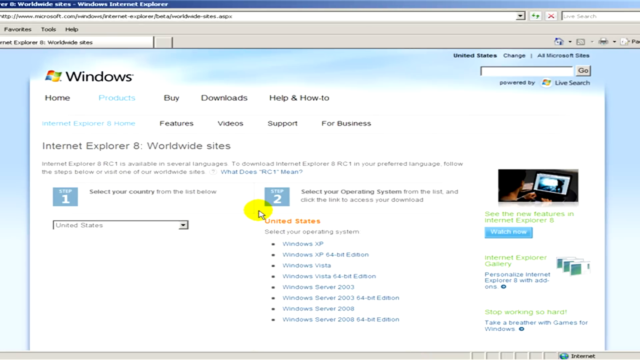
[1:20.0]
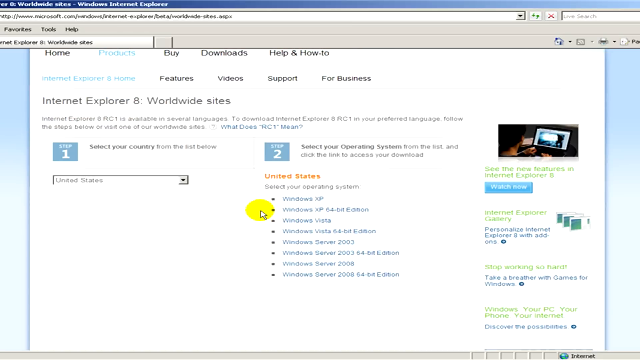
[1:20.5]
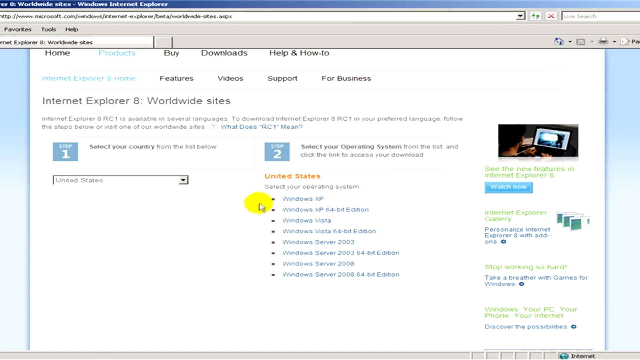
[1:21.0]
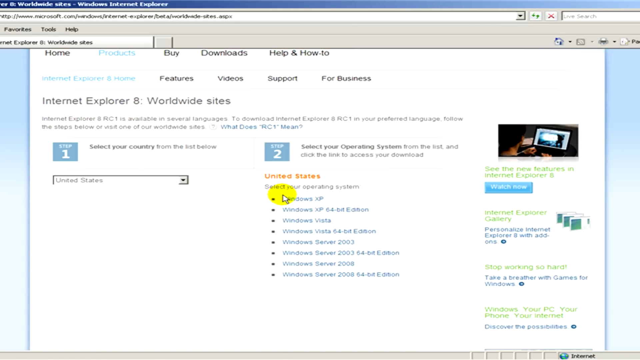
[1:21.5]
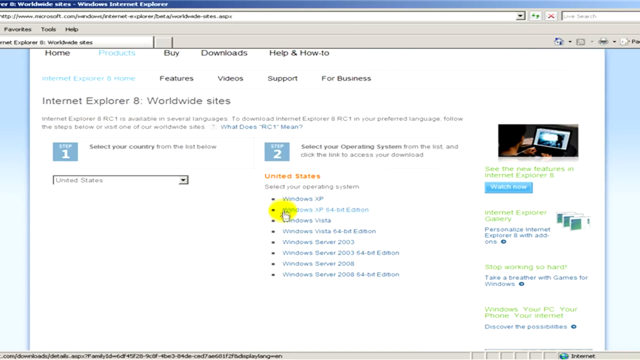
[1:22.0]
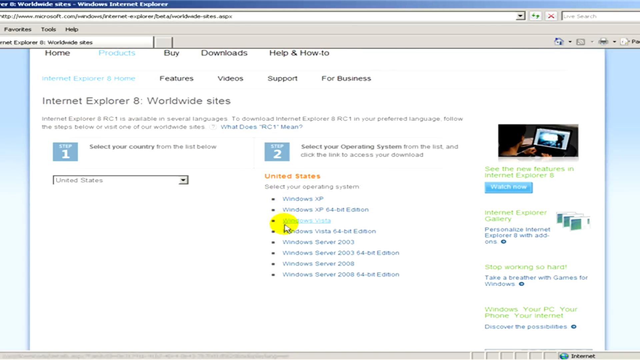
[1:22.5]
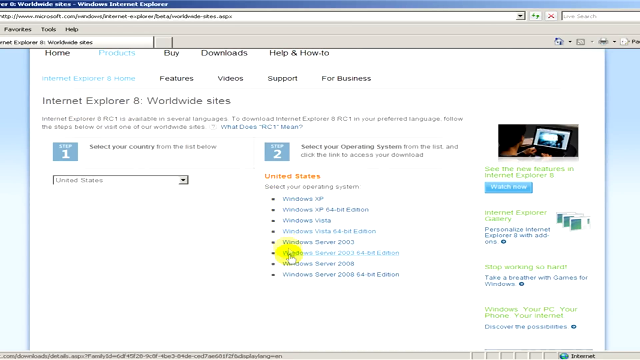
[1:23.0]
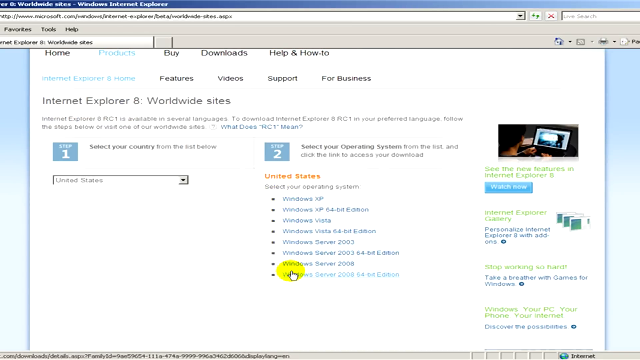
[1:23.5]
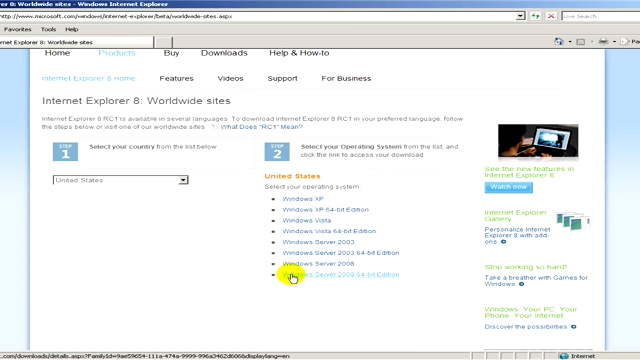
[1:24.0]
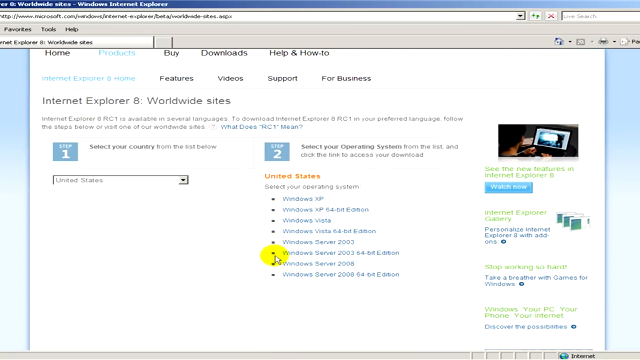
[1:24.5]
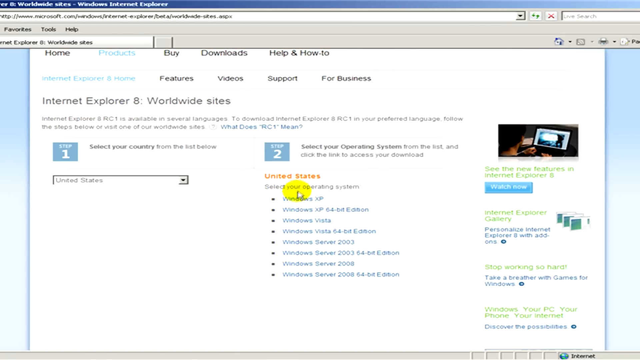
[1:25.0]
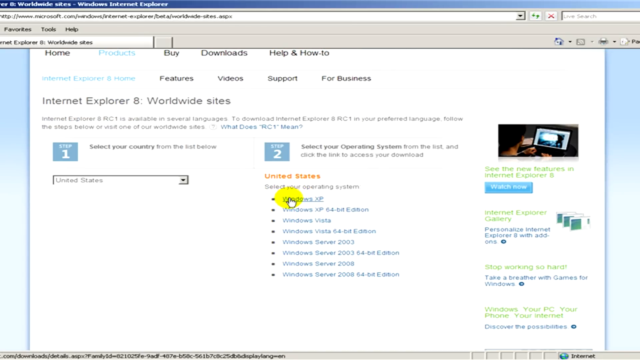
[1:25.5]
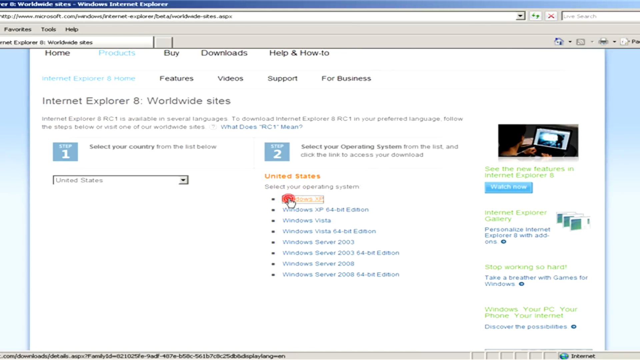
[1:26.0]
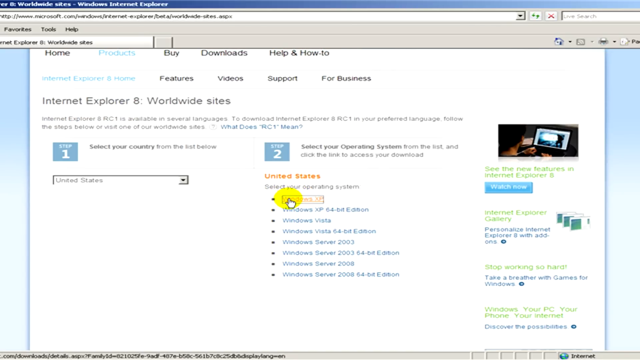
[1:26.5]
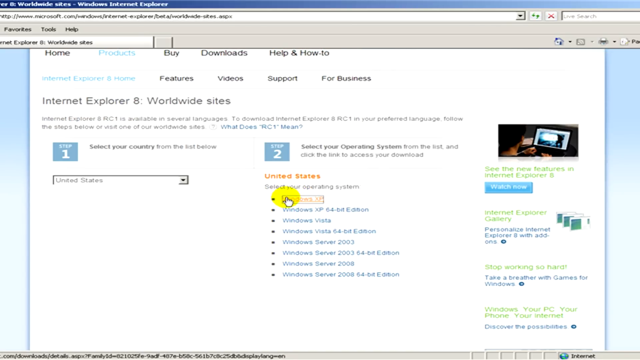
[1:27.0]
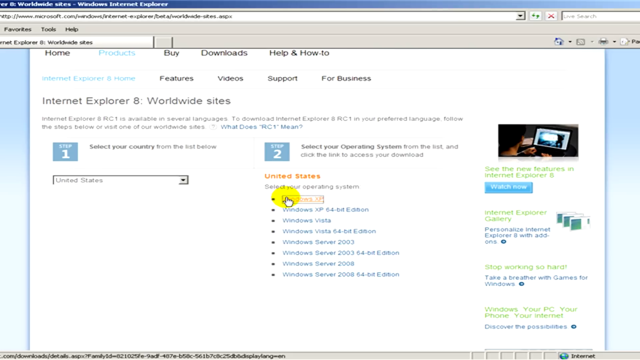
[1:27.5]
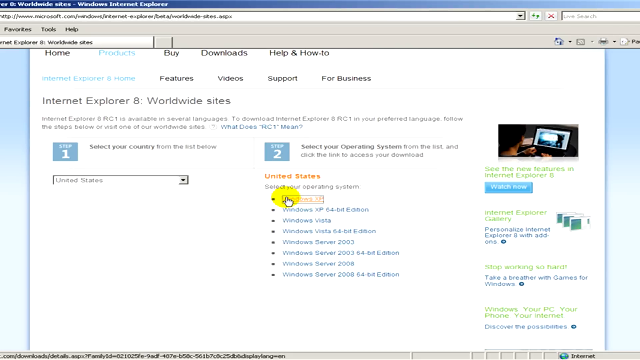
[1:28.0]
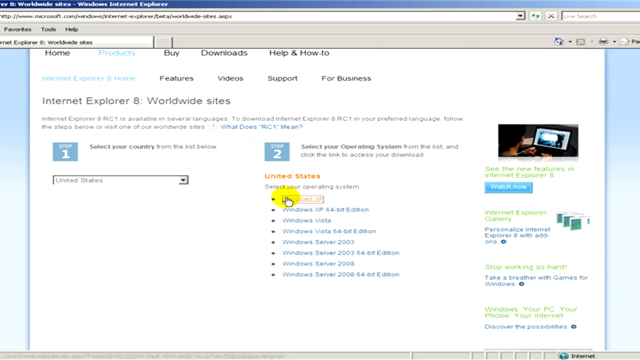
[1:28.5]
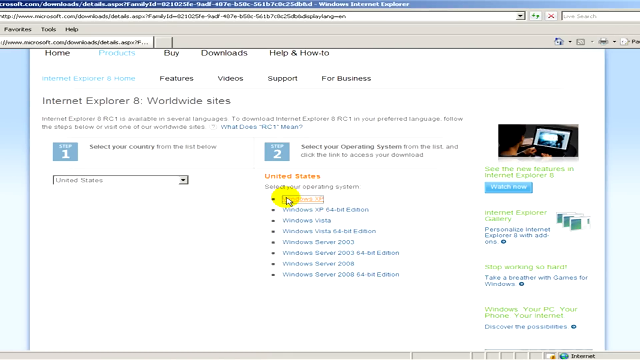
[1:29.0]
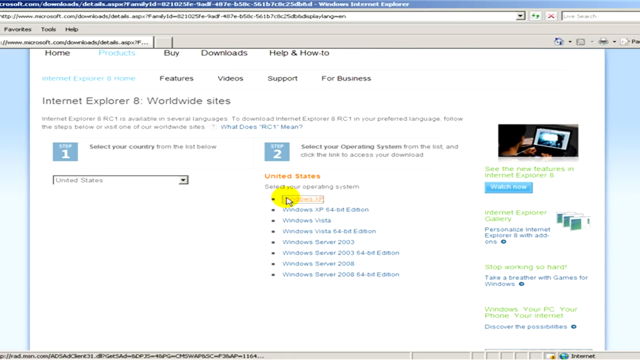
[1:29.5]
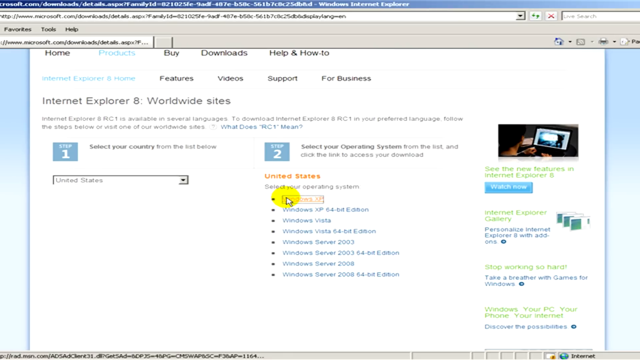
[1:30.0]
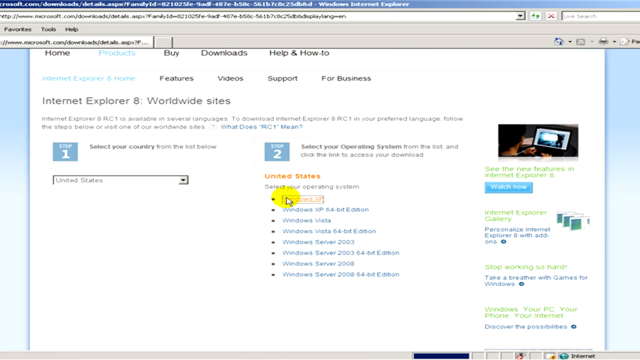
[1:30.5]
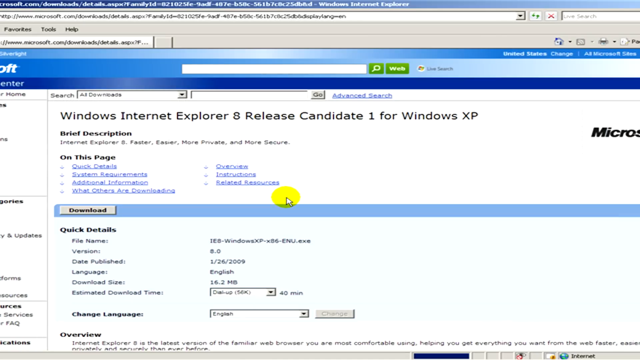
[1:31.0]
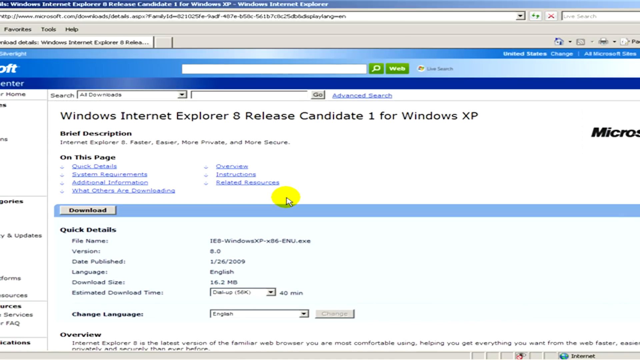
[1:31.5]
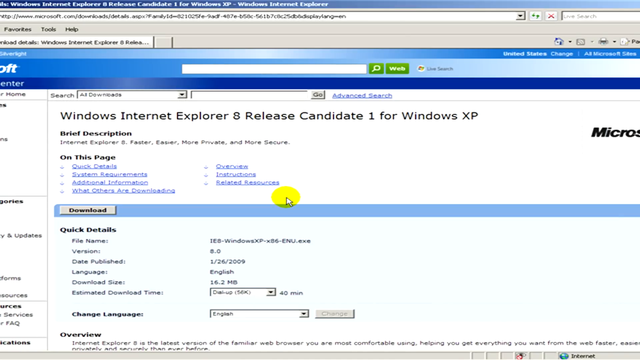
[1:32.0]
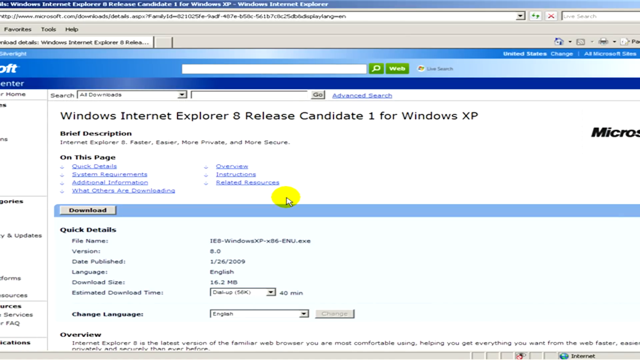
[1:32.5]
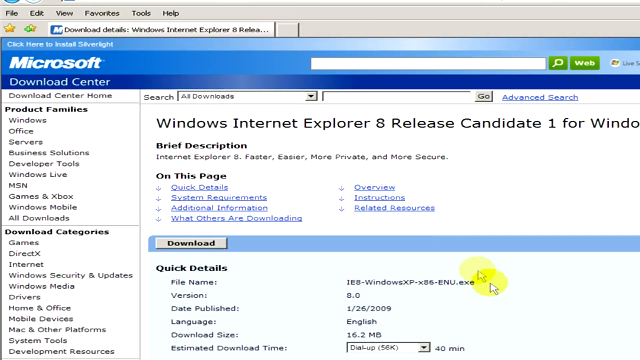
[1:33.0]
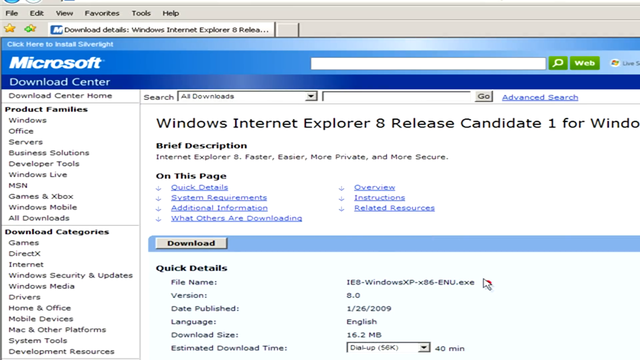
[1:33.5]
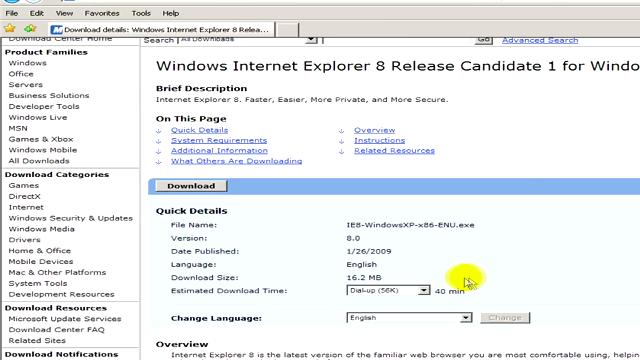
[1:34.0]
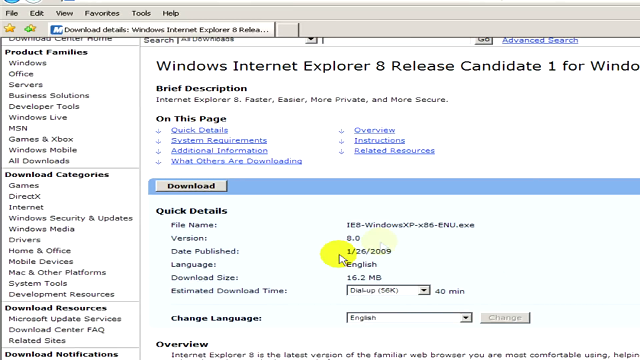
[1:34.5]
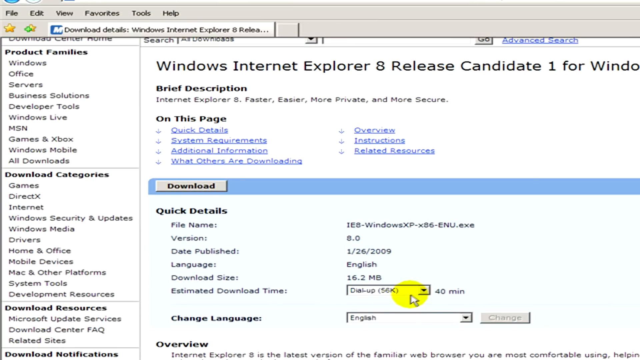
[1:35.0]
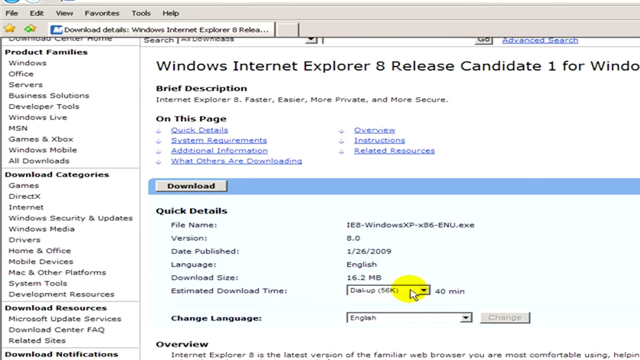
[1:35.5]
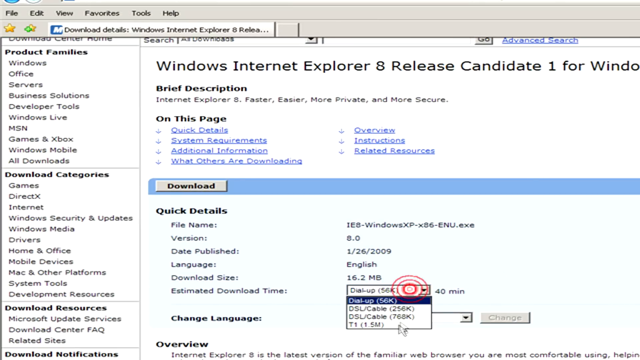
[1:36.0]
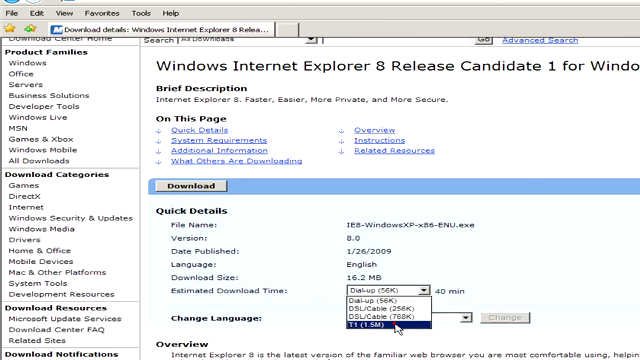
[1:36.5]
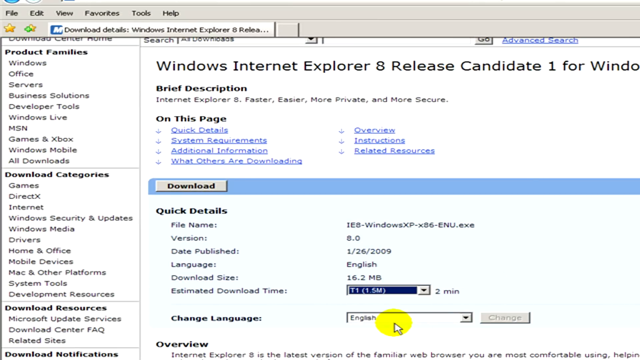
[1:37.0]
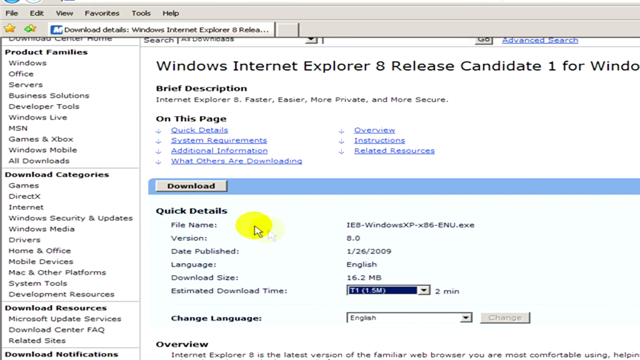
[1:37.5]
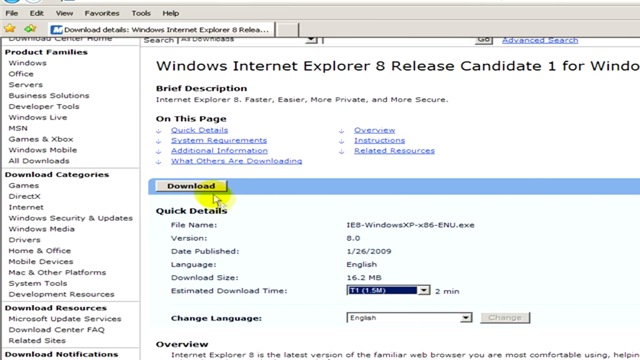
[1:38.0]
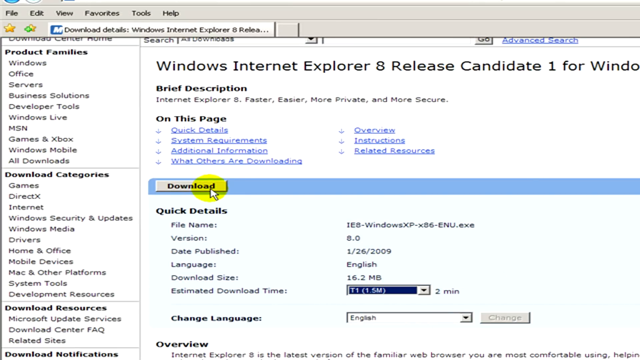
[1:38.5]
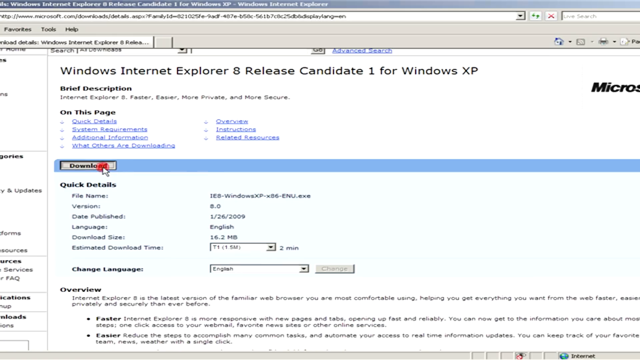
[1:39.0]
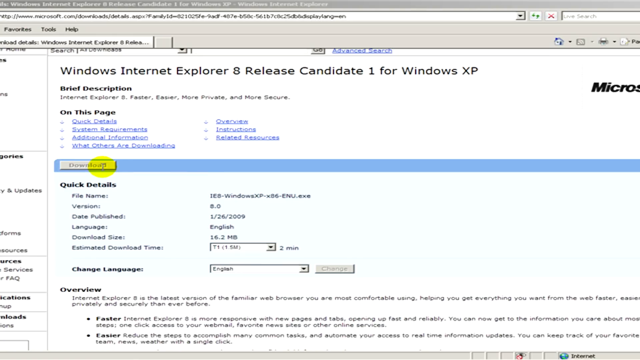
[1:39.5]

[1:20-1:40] The page with information on Internet Explorer 8 and the United States is shown, and the first option on the page is clicked. It redirects to a page about Windows Internet Explorer 8, with a description of Internet Explorer 8 and why it is better. There are also quick details, file names, and information about Windows XP, with the version given as 8.0. No people appear; only different webpages are shown. On the download details page, the page is scrolled down and the estimated download time for Internet Explorer 8 on this device is clicked. Then the download button on the page is clicked.